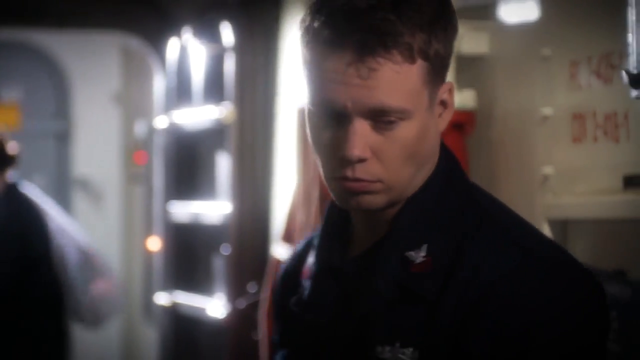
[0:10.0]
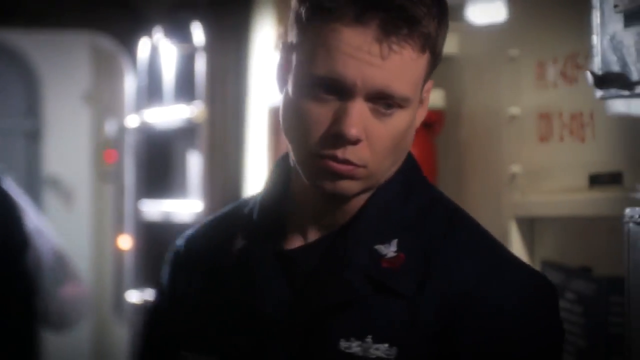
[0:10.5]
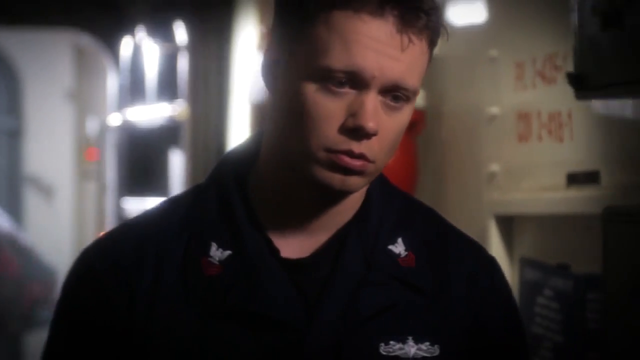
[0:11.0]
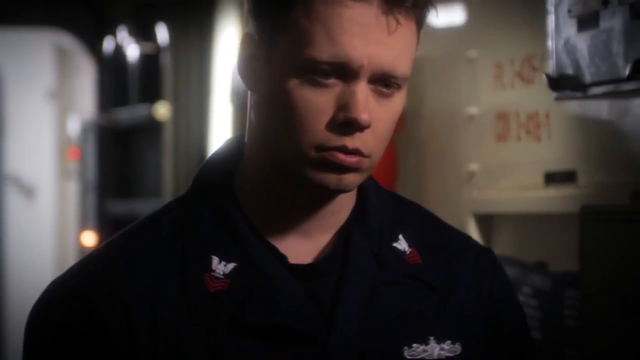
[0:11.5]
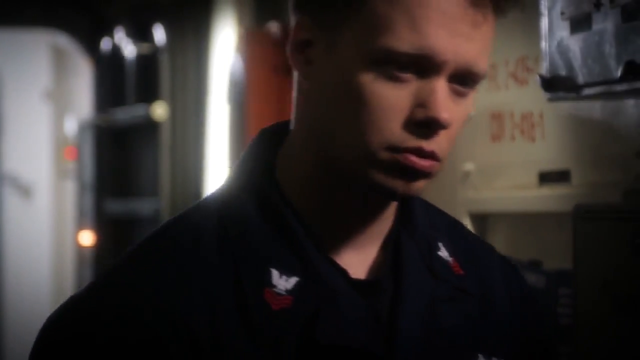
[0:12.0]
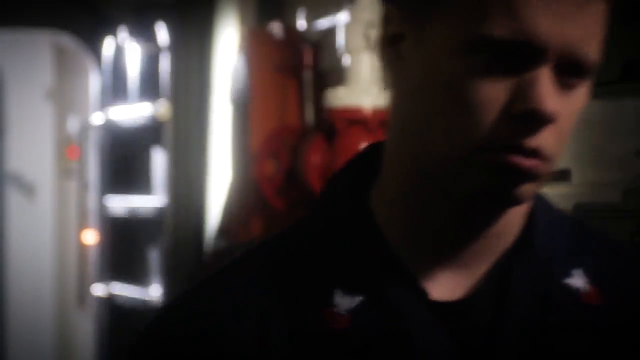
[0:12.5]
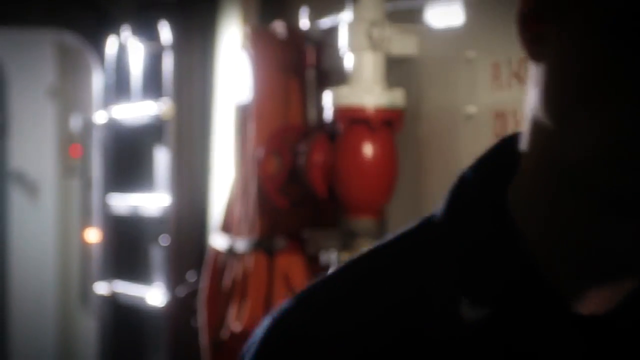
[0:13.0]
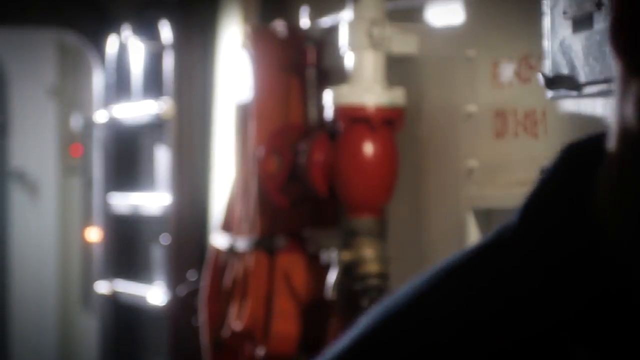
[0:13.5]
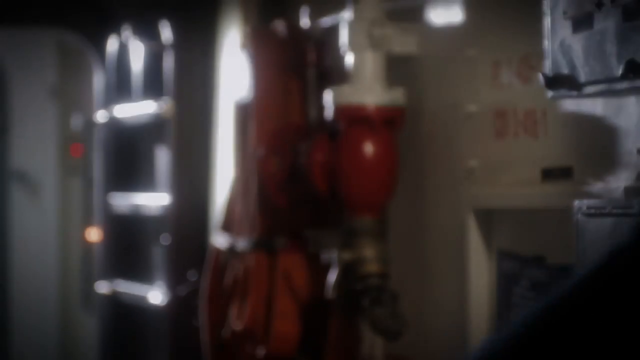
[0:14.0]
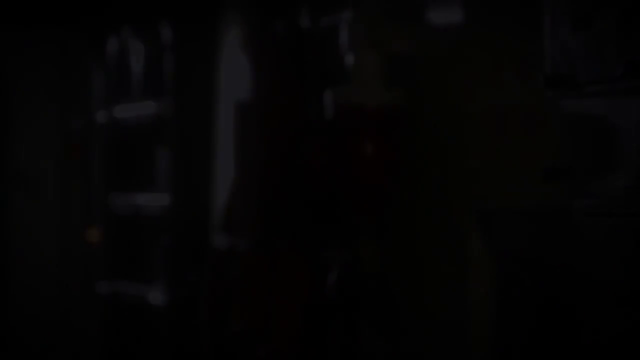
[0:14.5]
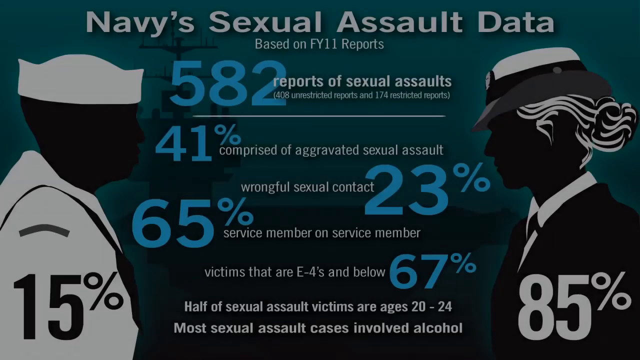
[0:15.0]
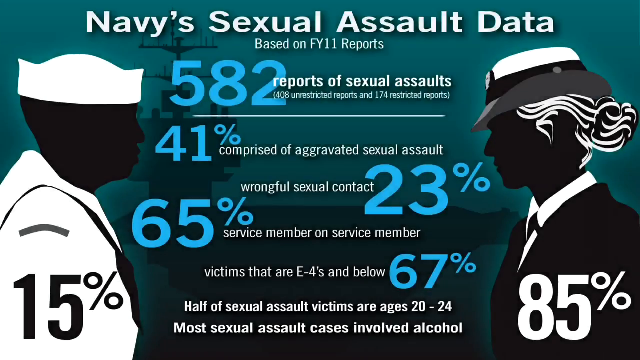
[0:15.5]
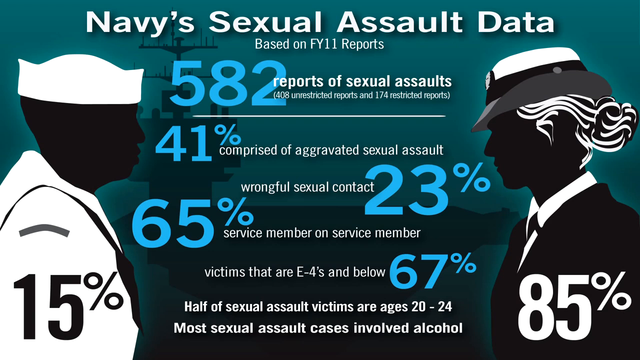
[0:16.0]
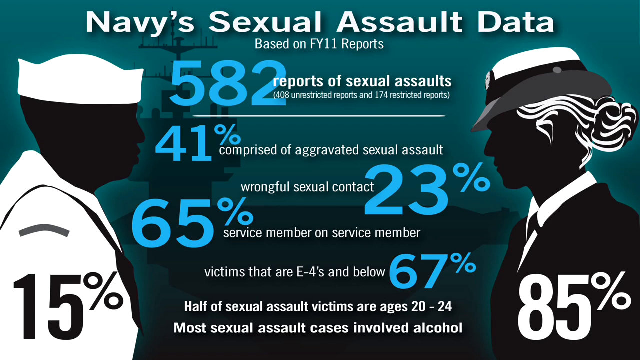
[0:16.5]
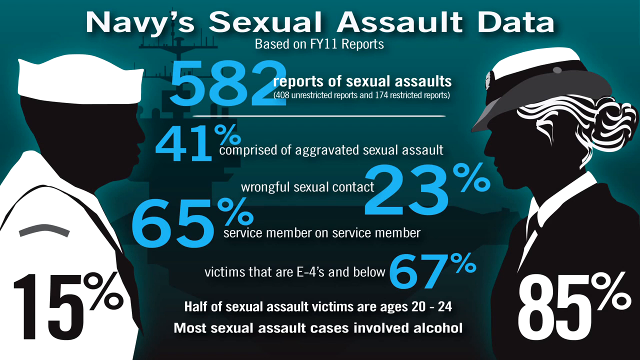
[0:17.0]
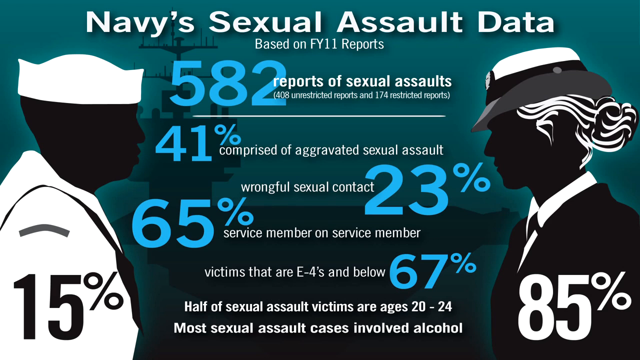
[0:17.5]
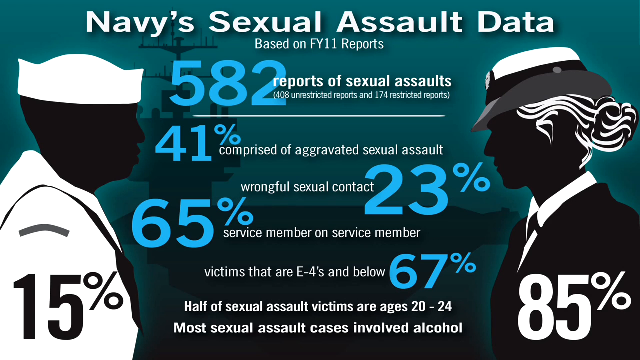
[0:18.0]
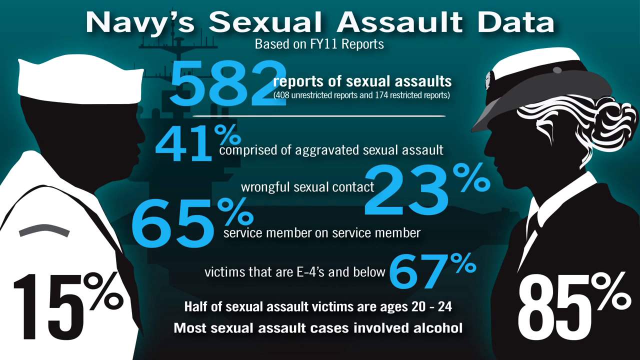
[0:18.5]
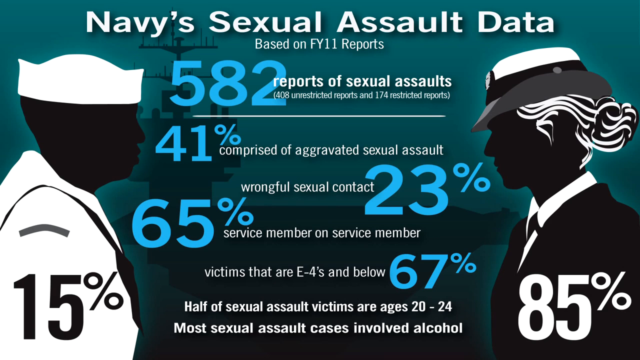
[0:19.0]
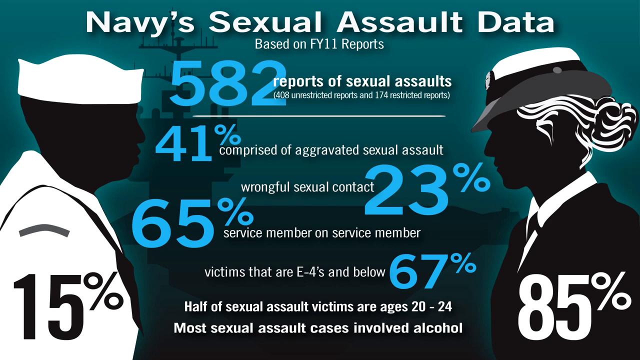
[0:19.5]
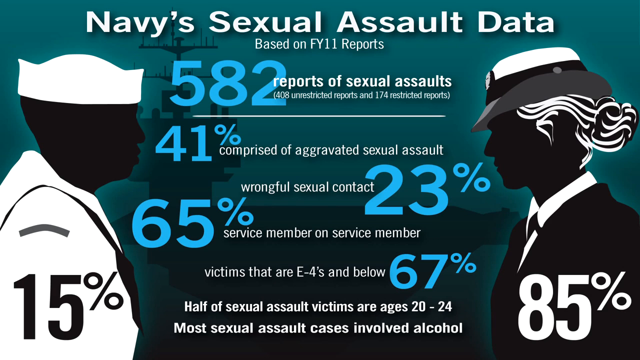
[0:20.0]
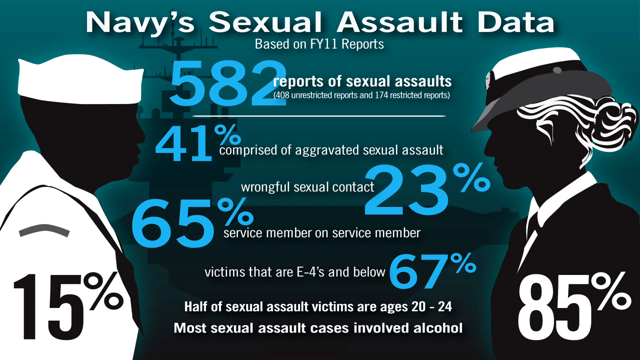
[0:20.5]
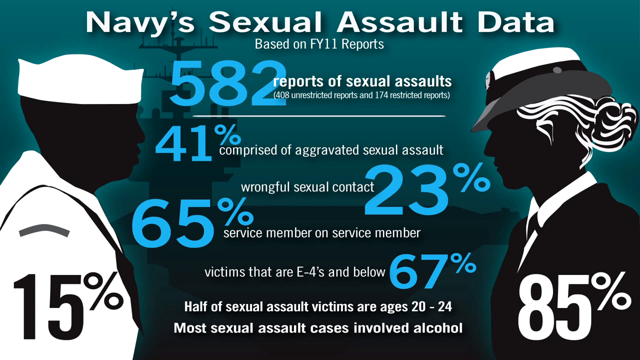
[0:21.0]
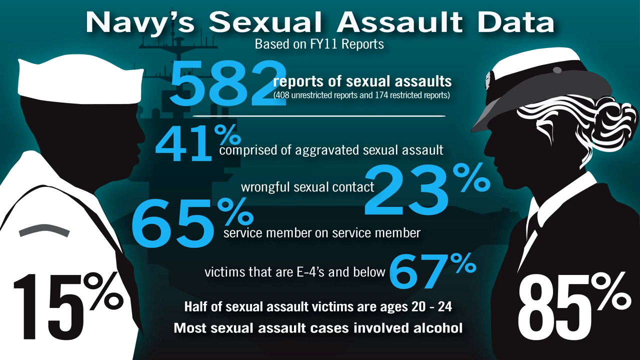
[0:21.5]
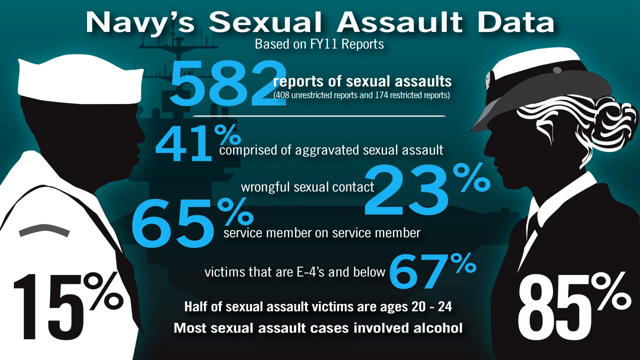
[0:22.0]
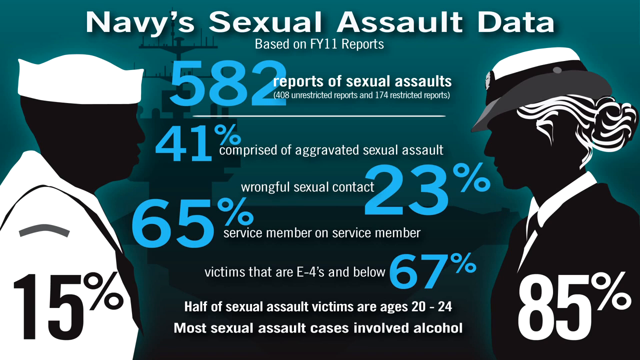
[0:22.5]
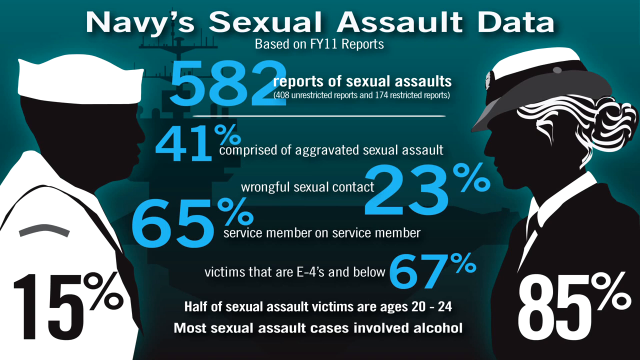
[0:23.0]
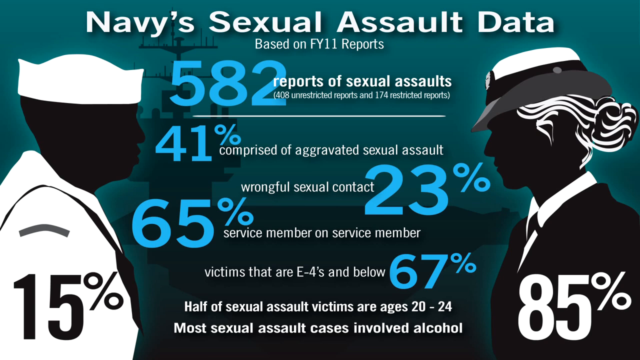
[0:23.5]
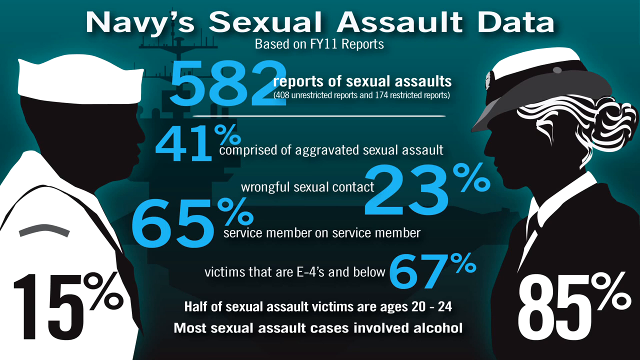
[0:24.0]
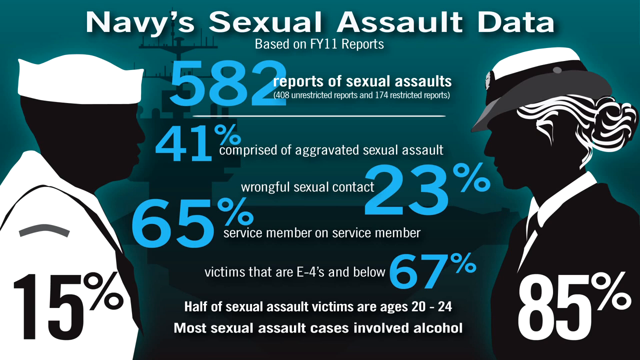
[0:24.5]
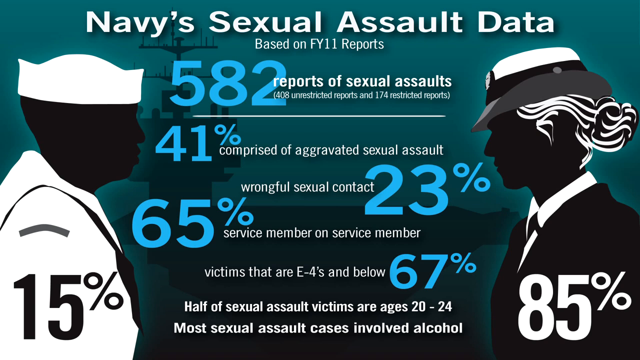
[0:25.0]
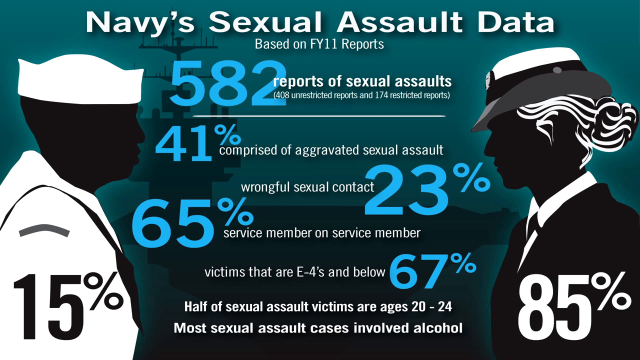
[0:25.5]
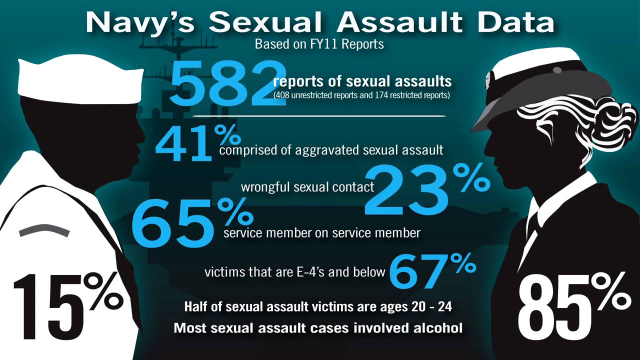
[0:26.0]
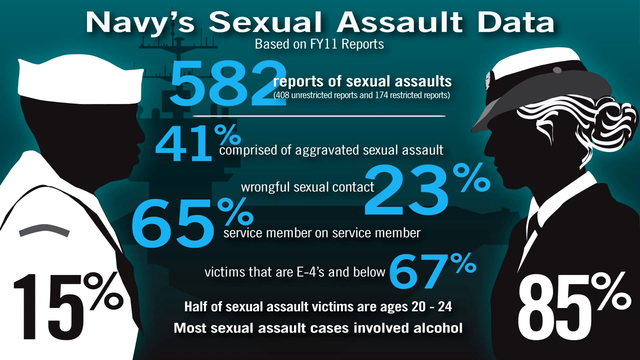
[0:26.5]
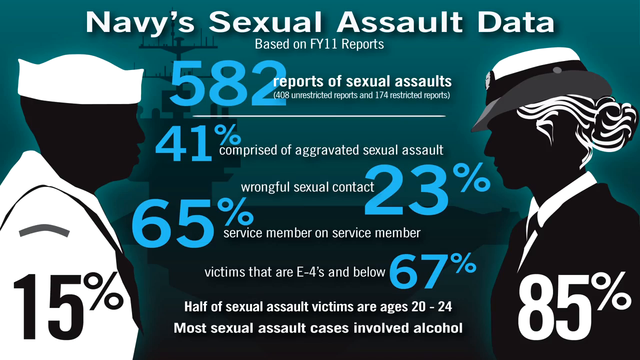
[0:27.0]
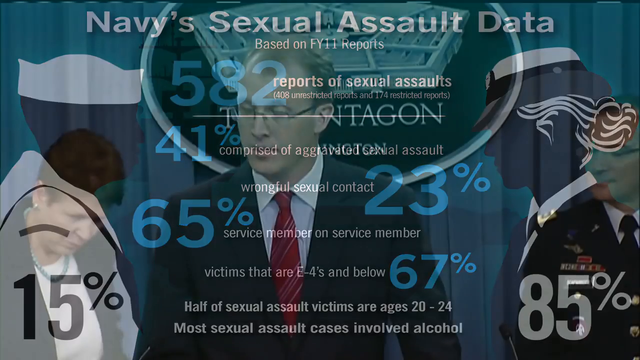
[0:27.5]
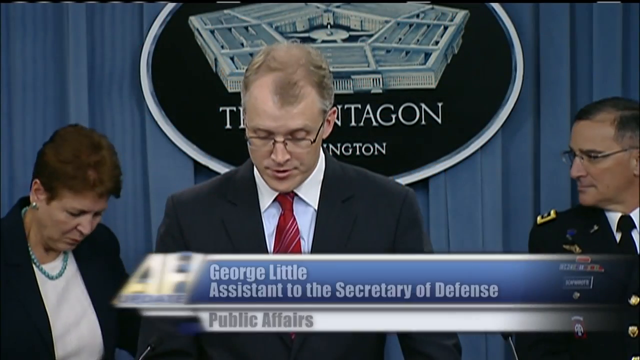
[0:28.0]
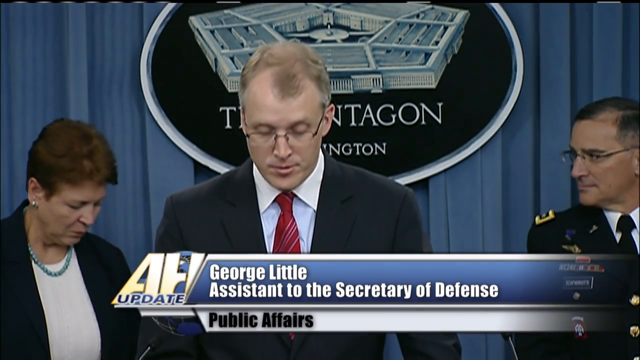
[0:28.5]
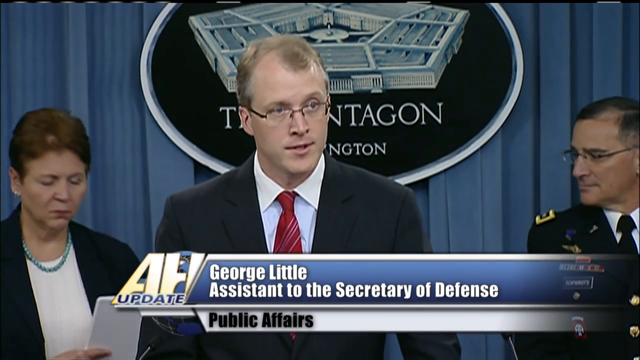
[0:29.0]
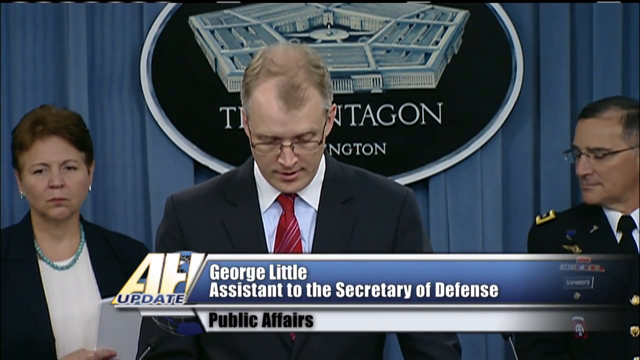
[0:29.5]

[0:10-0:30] A man dressed in a uniform is in some military building. He looks sad and has short hair. Some orange text is behind him, and he walks away. Some red stuff is also behind him. Next come what are apparently sexual assault data based on FY11 reports: 582 reports of sexual assaults, 400 unrestricted reports and 174 restricted reports; 31% comprised of aggravated sexual assaults; wrongful sexual contacts, 23%; service members on service members, 65%; victims that are E4 and below, 67%; half of sexual assault victims are aged 20 to 24; most sexual assault cases involve alcohol. A picture shows a man and a woman: the man is in white with 15% on his uniform, and the woman has 85% on a black uniform. George Little, Assistant to the Secretary of Defense of Public Affairs, is then seen speaking in the Pentagon. Two people are on the left, there is a woman, and on the right is a general.